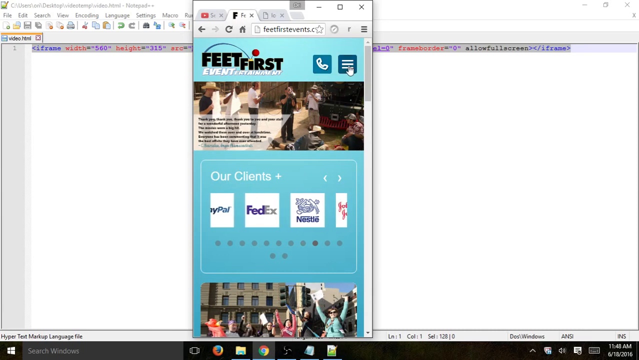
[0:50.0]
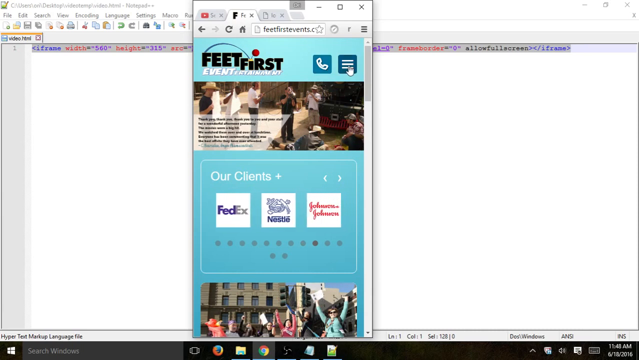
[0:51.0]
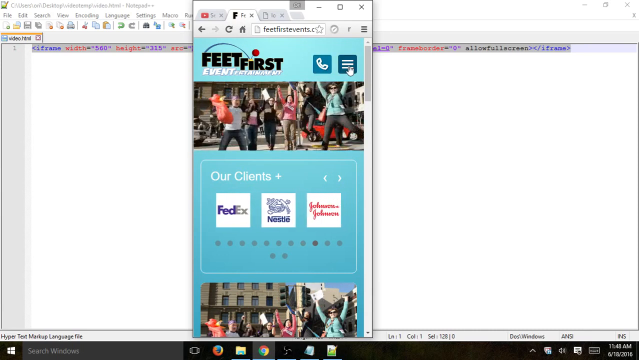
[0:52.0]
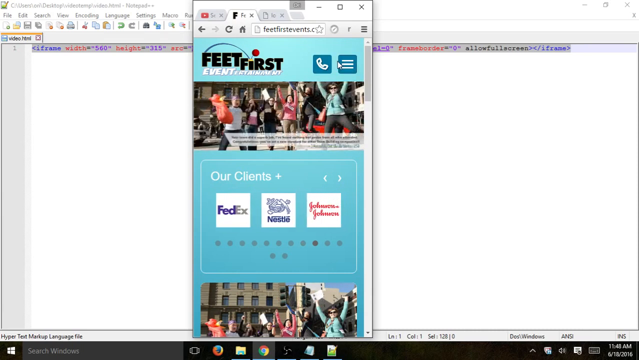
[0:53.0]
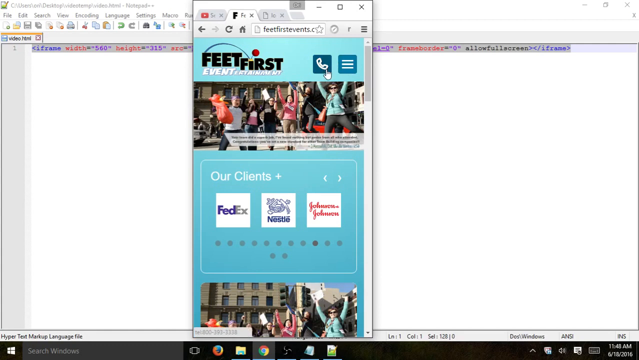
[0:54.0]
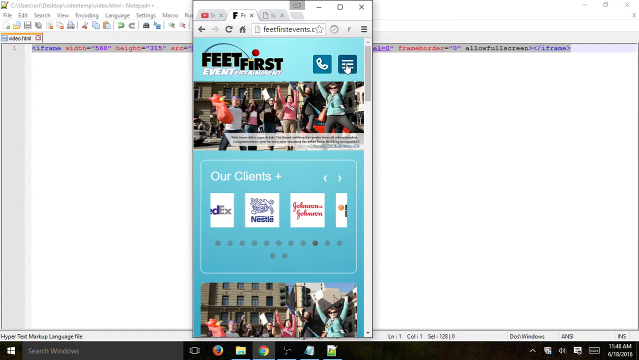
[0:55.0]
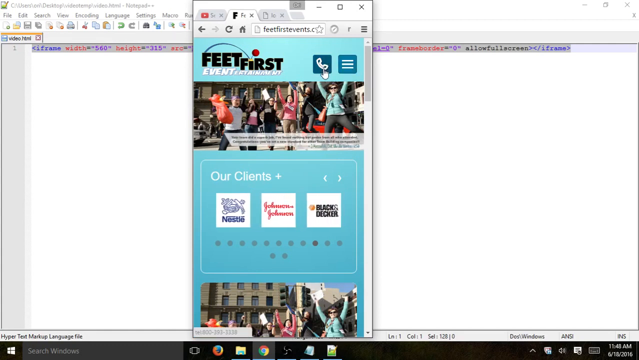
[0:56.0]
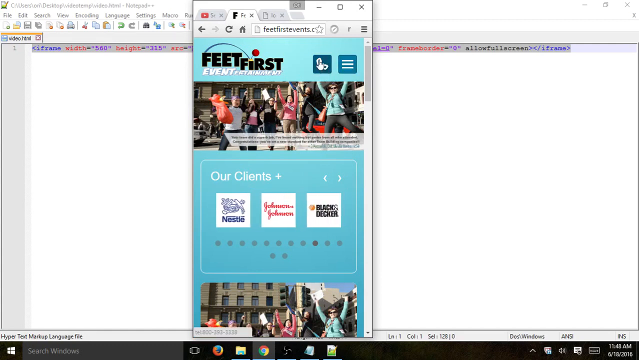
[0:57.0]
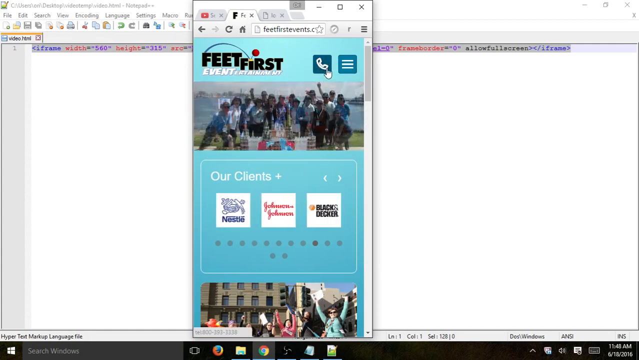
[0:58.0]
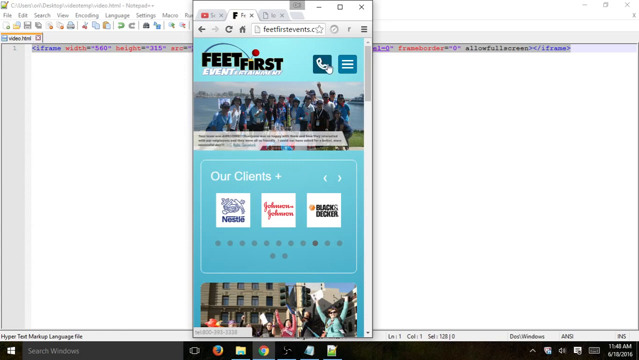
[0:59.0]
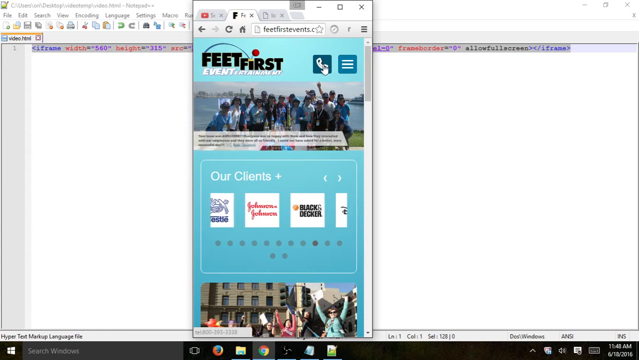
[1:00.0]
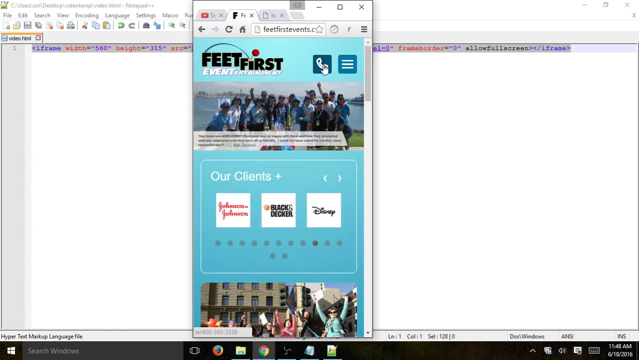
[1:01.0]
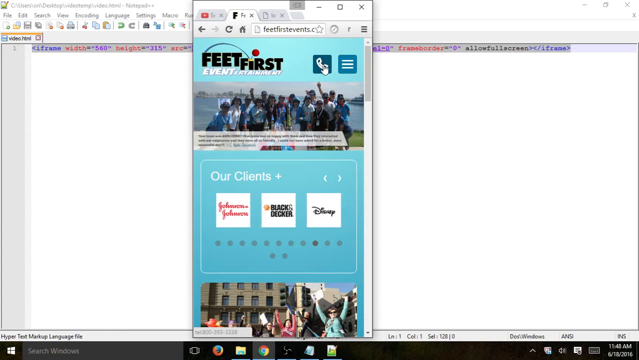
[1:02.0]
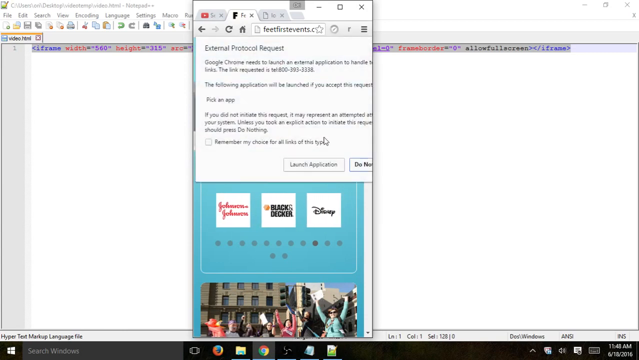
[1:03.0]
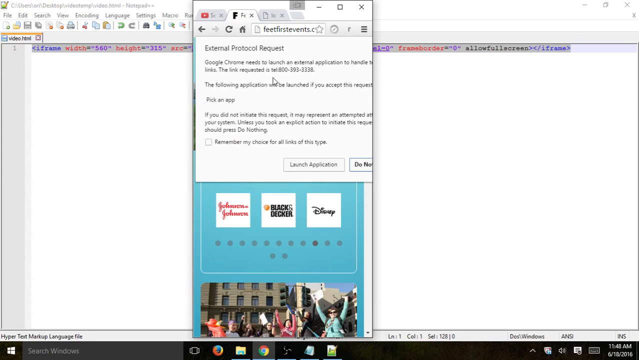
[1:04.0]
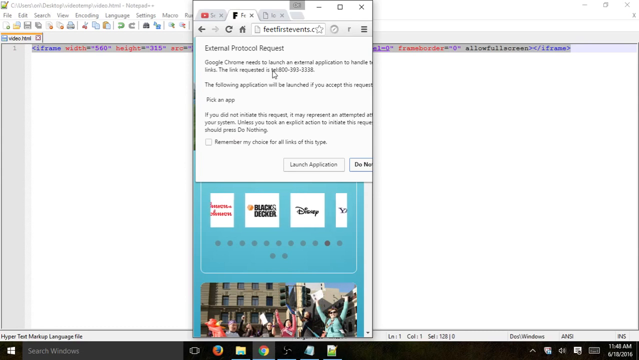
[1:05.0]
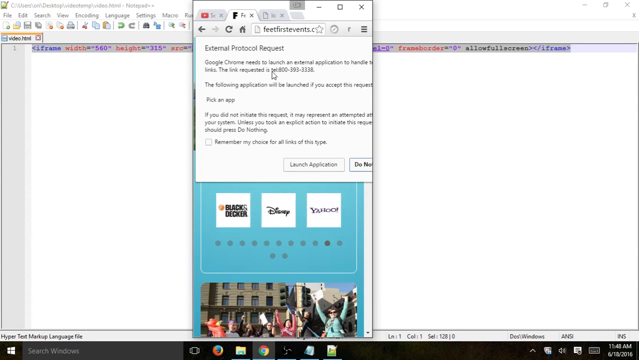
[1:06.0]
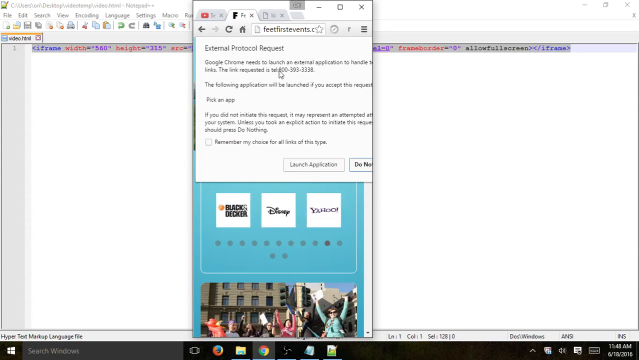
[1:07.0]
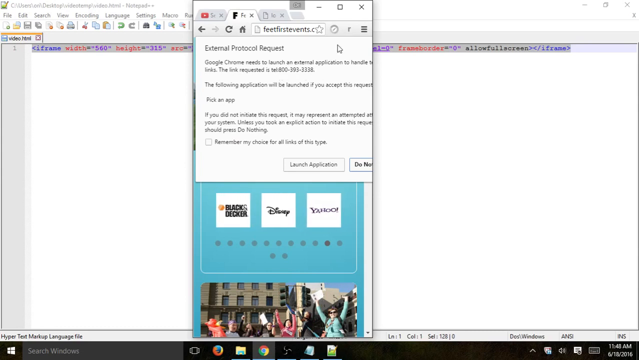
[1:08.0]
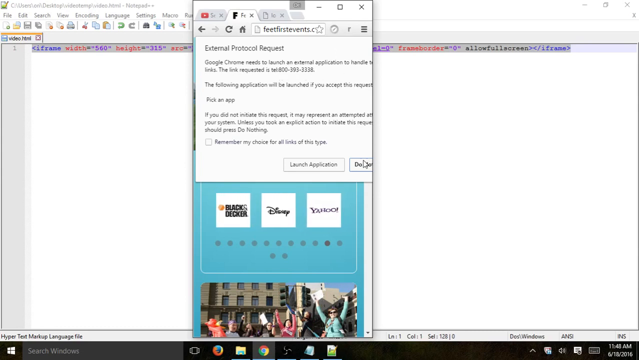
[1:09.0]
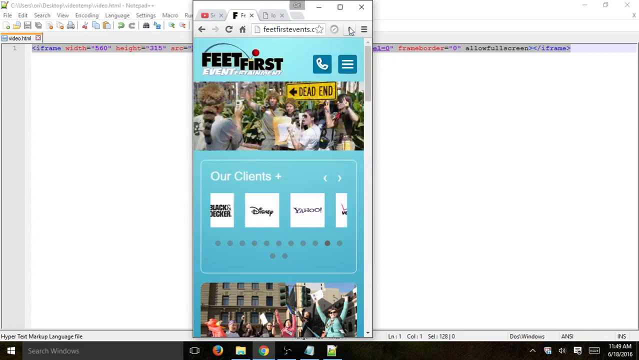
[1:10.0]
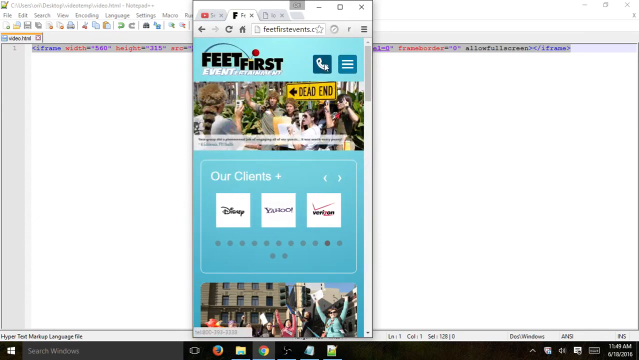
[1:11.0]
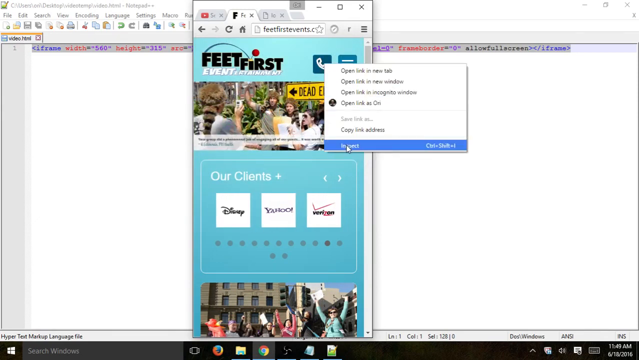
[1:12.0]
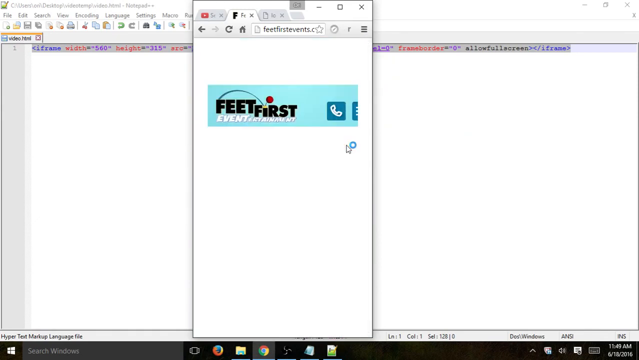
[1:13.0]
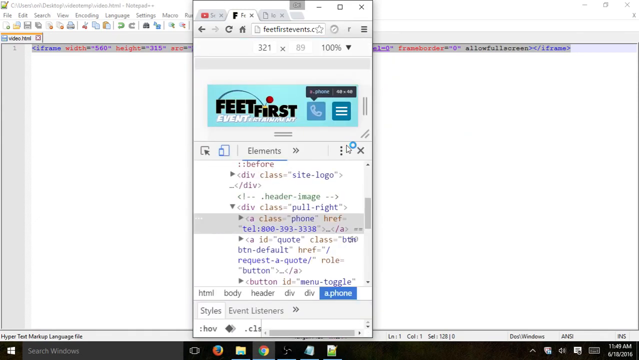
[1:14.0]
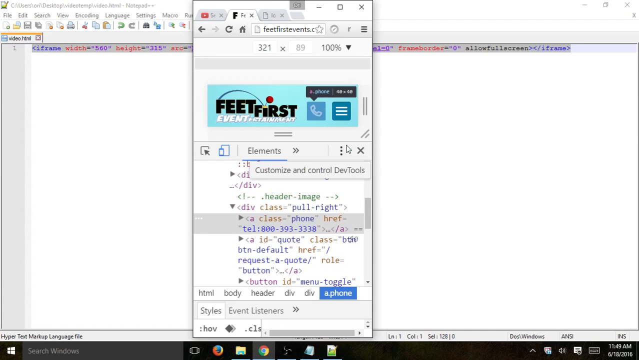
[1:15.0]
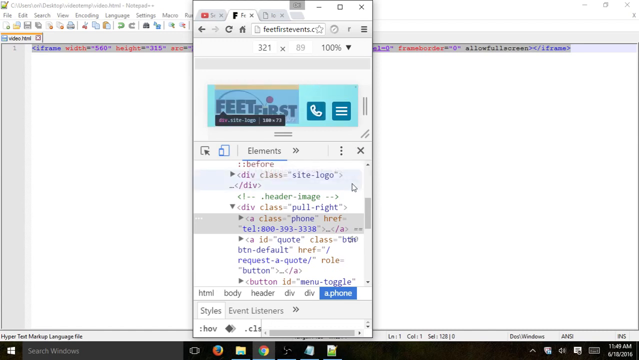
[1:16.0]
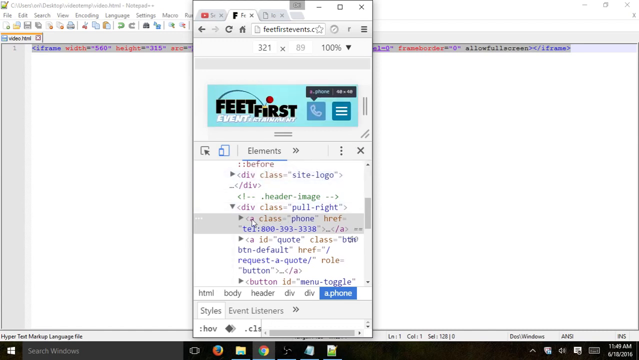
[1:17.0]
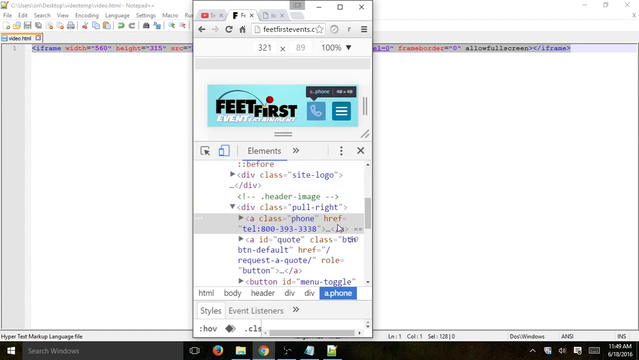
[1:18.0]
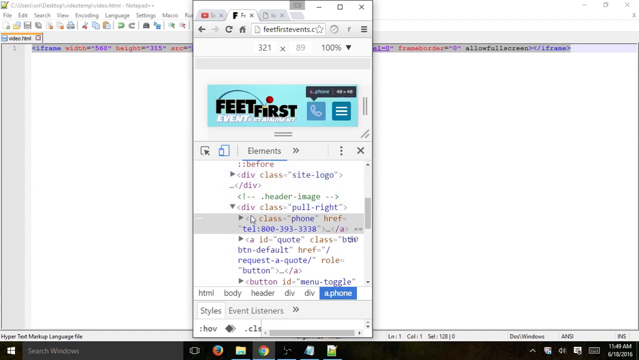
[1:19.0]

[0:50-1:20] People are jumping. The mouse cursor, shaped like a pointing hand, circles the Facebook button while the our clients section scrolls across, going from the original names to Nestle, Johnson & Johnson, Black & Decker, Disney, Yahoo and Verizon. During this time the hand cursor circles the call button. An external protocol request then drops down, giving a telephone number; the launch application option is blurred out, and a "do not" option is available. The cursor, now an arrow, points to the telephone number 800-393-3338. It clicks and selects the last option, which is a little blurry and can't be read, but its shortcut is control shift plus. This brings up the HTML of the page, with items like "CA class" and "site logo", and the telephone entry is highlighted in the HTML.